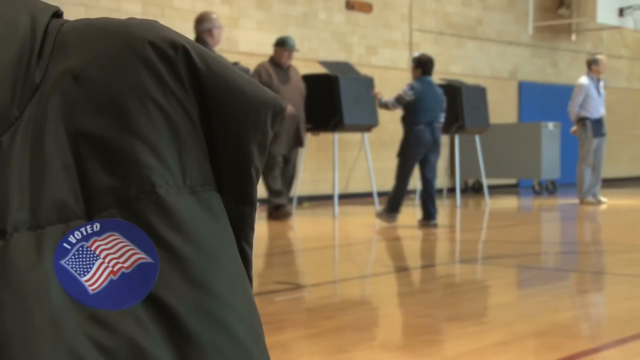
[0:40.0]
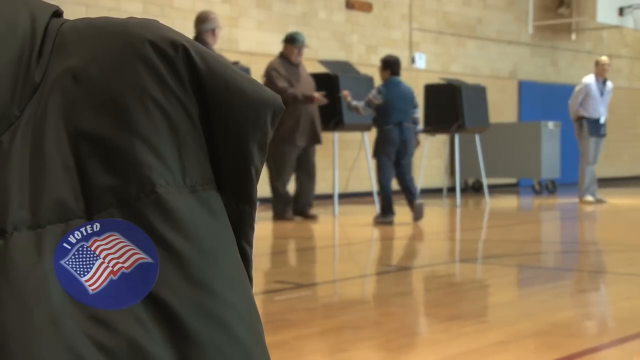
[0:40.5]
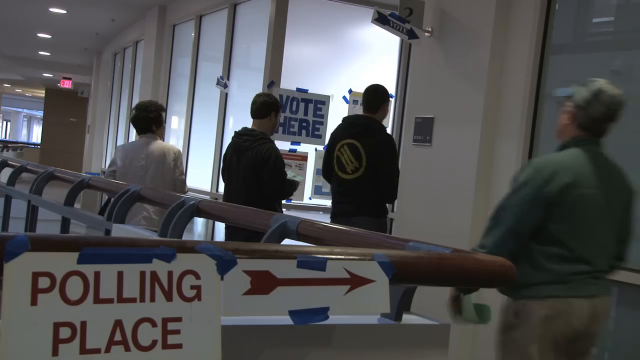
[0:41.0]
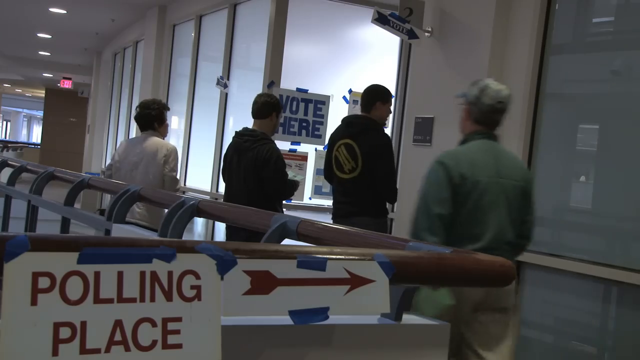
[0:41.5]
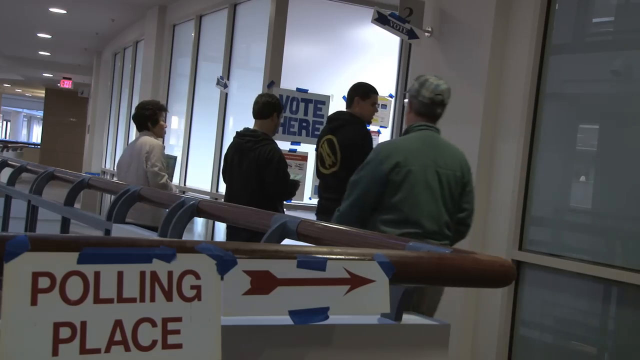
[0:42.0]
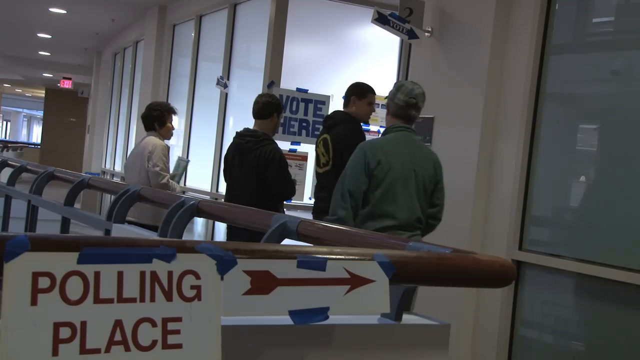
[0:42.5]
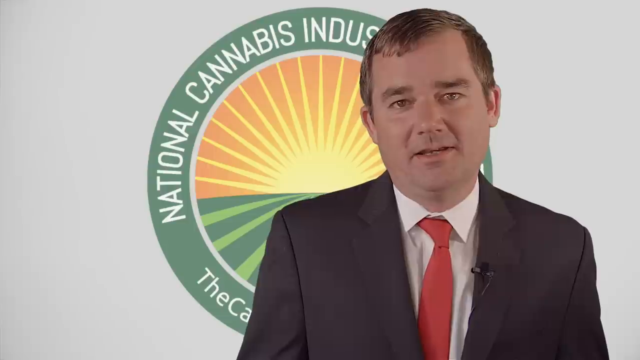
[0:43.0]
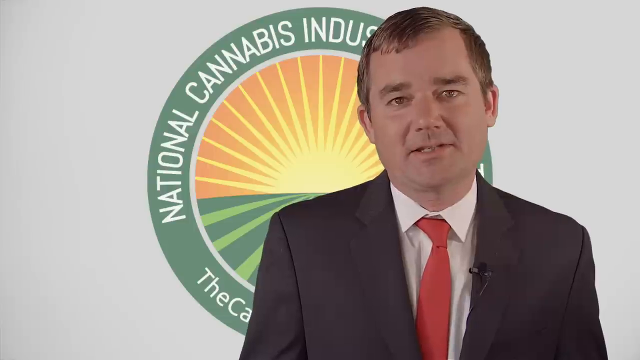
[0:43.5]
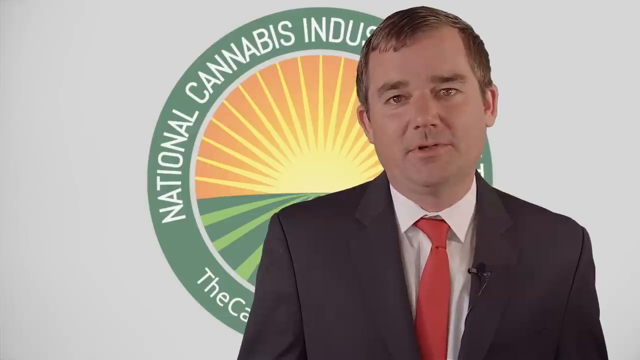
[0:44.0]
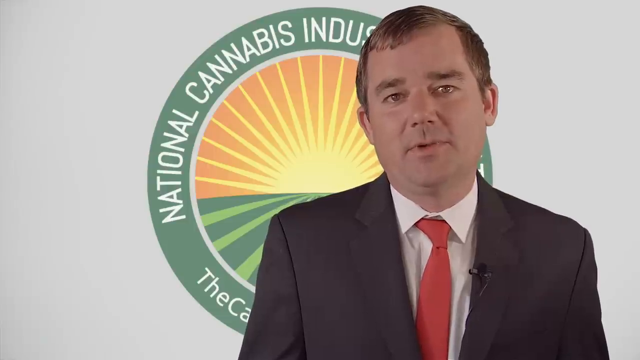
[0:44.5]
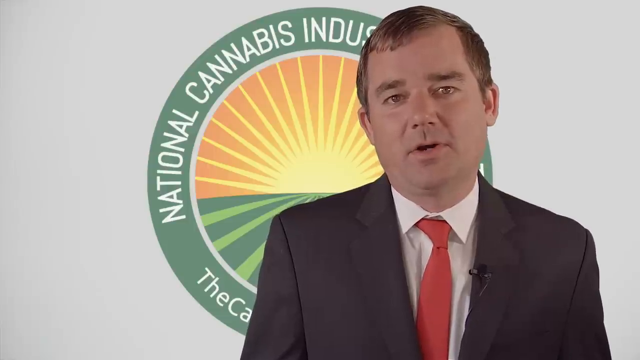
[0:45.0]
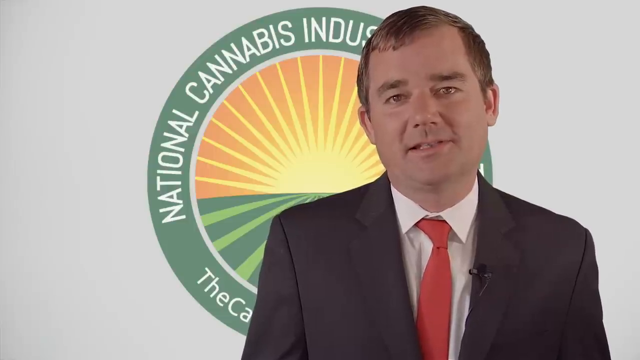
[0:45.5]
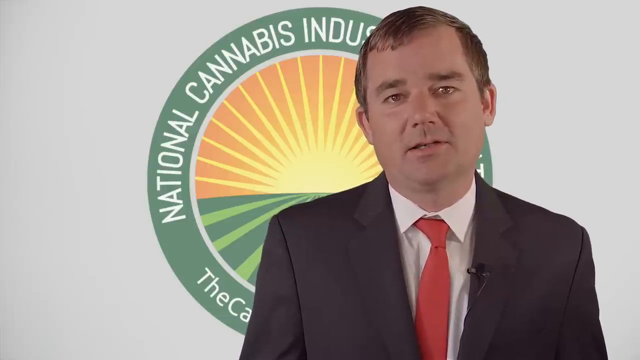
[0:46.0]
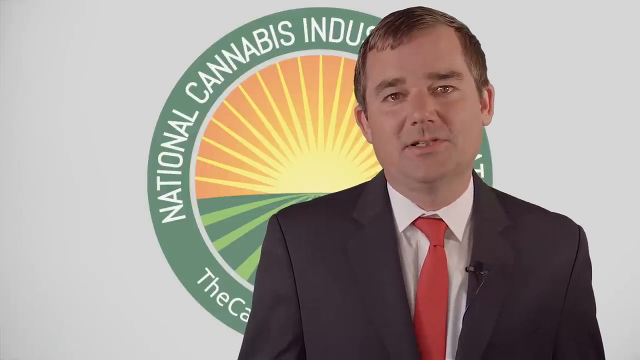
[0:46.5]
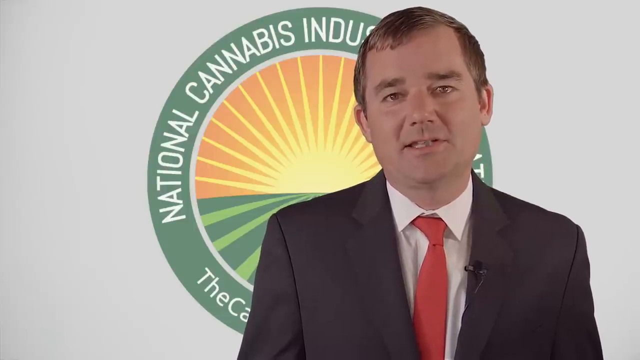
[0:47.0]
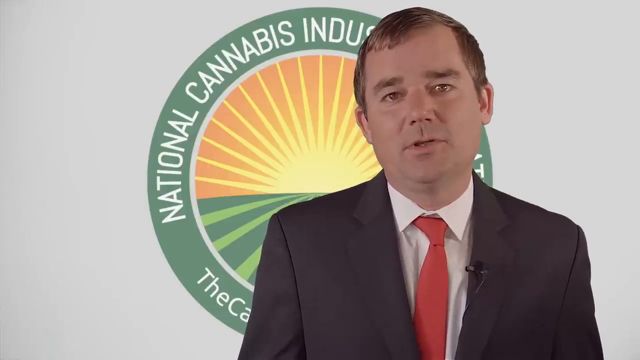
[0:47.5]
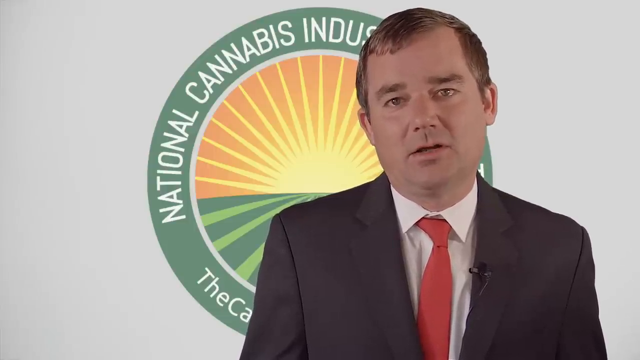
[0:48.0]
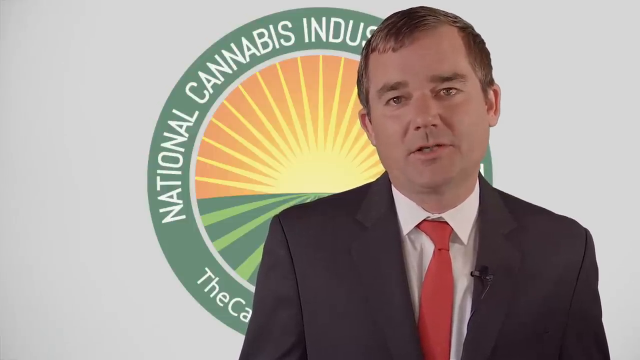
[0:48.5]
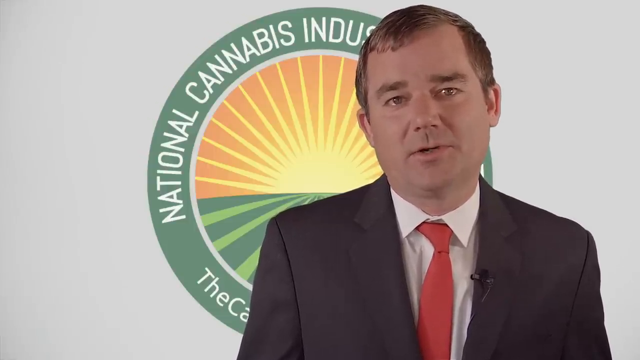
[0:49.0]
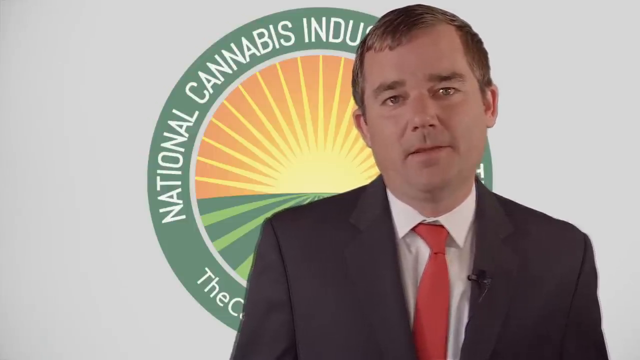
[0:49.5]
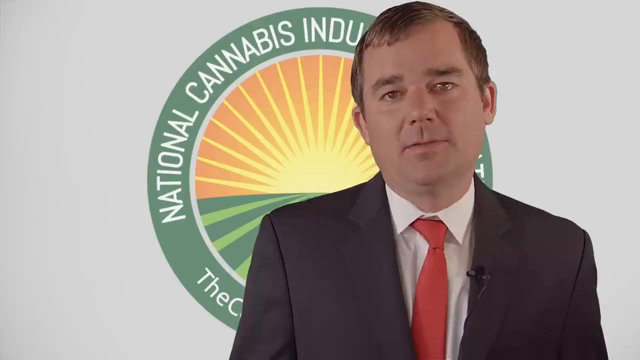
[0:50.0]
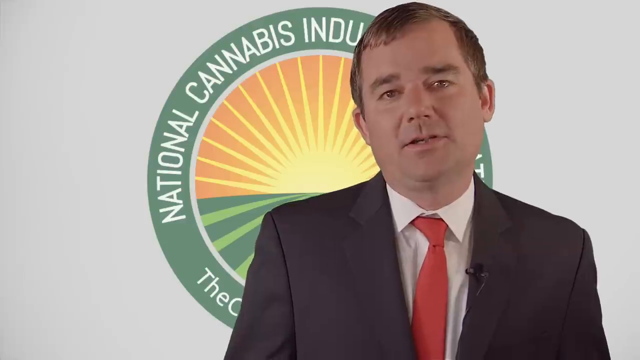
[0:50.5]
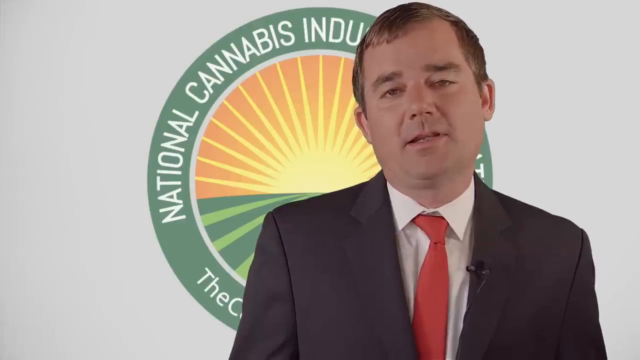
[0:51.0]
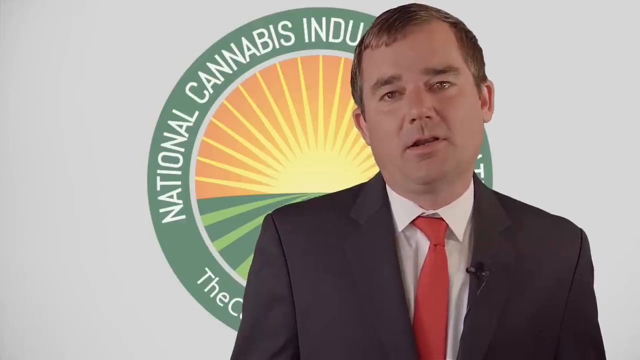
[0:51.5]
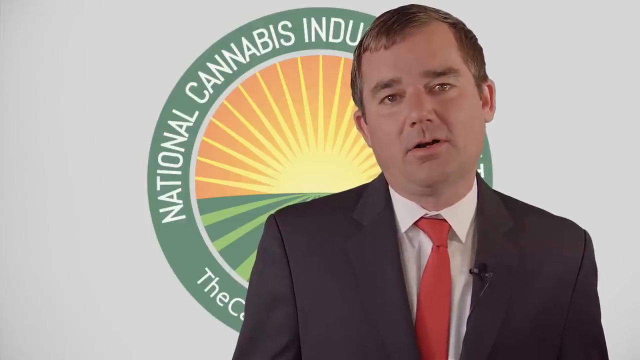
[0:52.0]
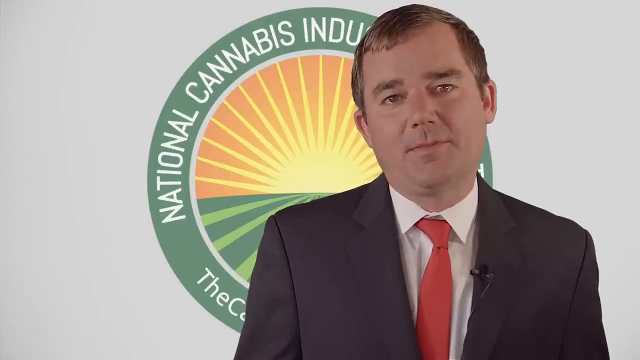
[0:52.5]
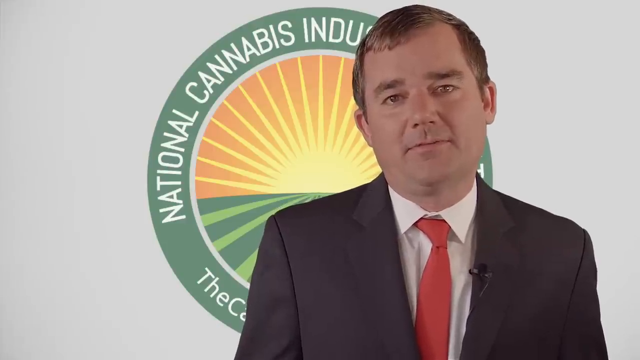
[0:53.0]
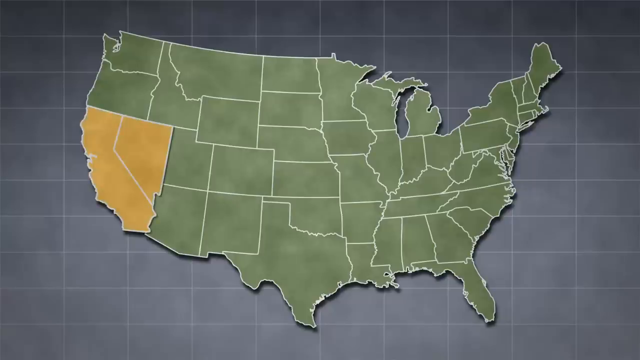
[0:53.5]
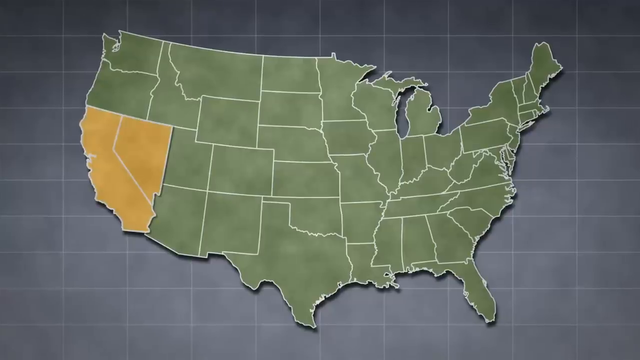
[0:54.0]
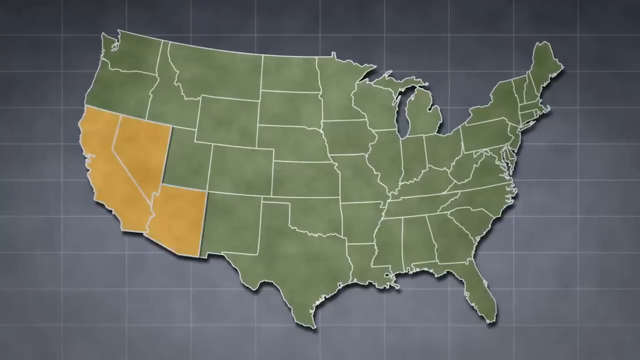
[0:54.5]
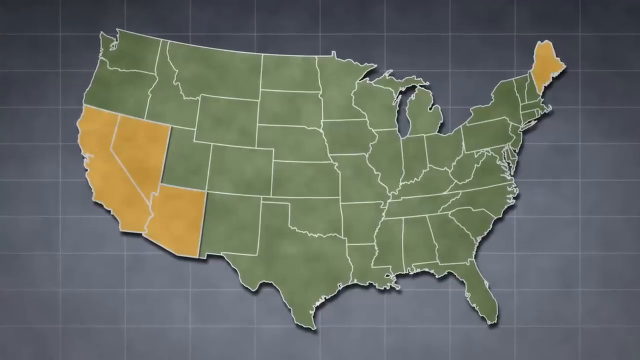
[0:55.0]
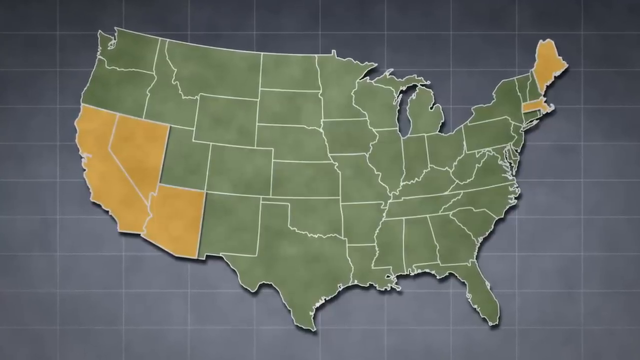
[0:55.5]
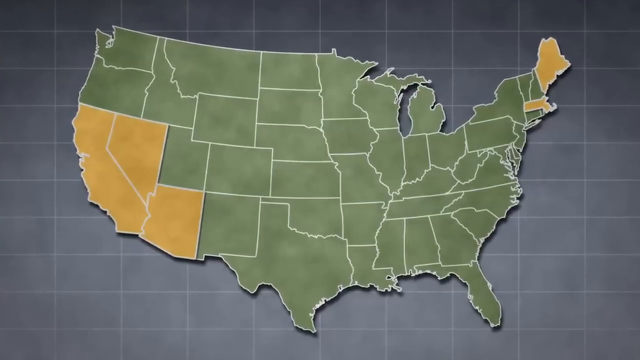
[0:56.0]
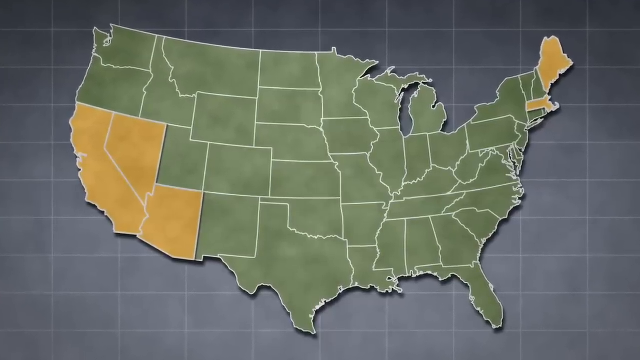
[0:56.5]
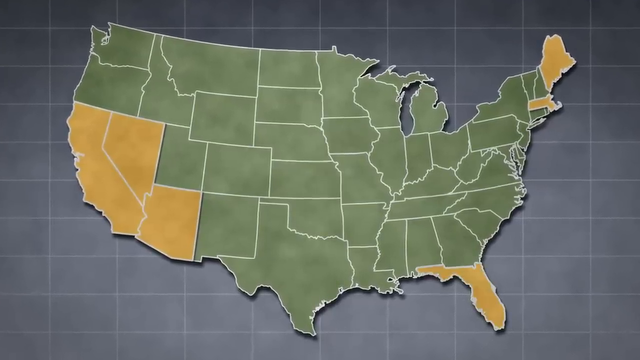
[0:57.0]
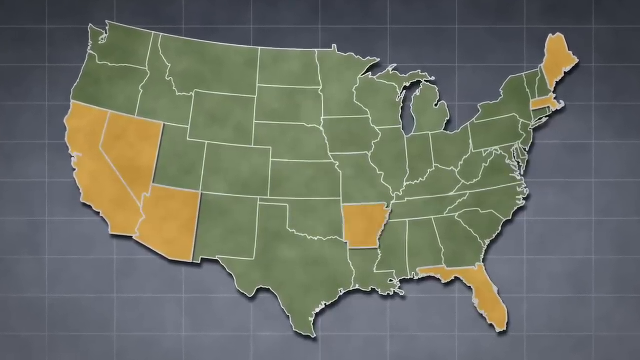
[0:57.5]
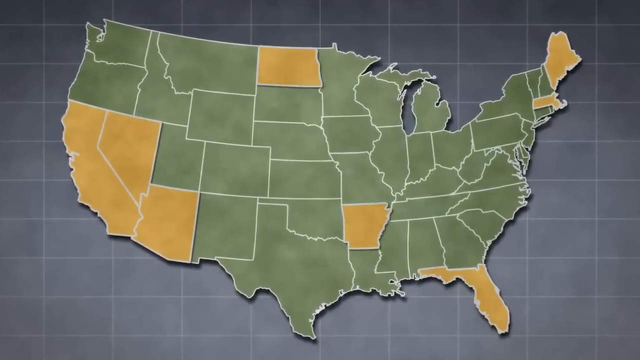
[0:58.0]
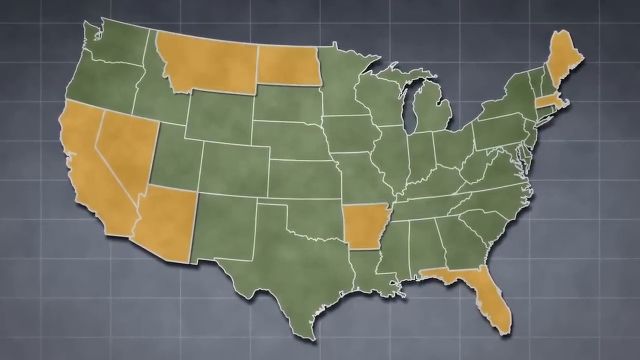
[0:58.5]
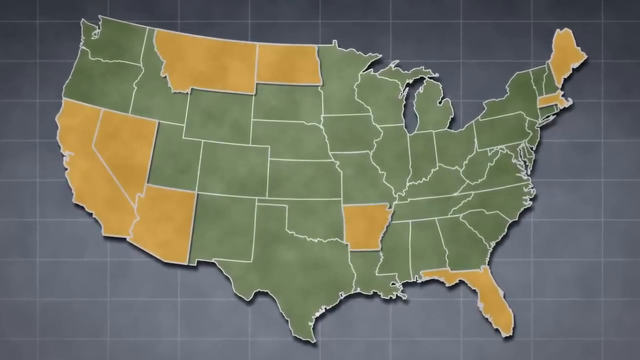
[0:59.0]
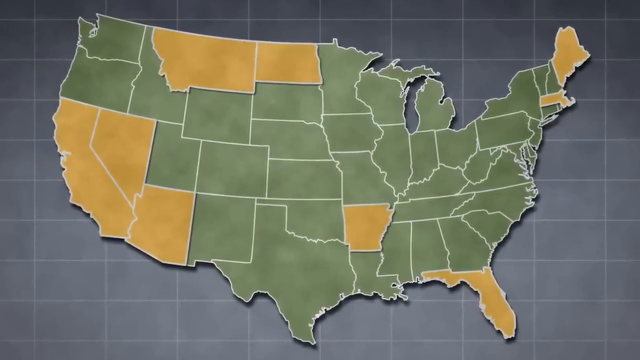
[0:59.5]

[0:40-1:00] A few people are seen voting; four men and one woman are on the screen. A poster reads "polling place" and gives a direction, so people are being directed where to vote; they seem to be voting on a cannabis issue. There is an arrow and a number above the door where they are supposed to vote; the door is numbered two. Arrows point inside the building. The executive director then continues talking, facing the camera, with little change in his mood and not much happening on the screen, the logo still behind him. The same map of America follows, but this time the states are colored yellow in sequence, one after another, possibly to match what he is saying.